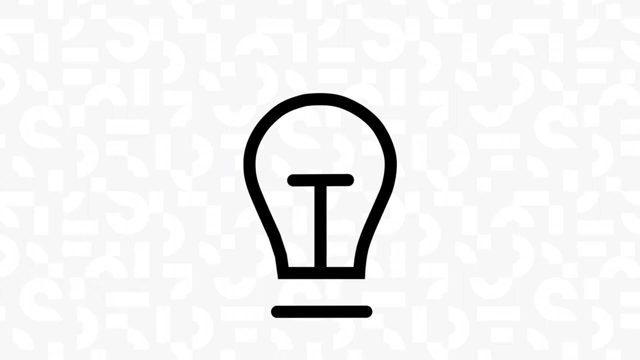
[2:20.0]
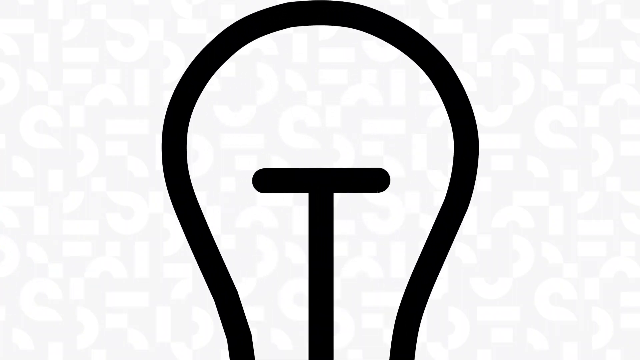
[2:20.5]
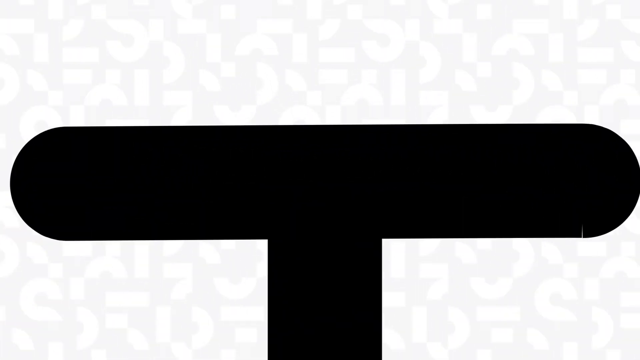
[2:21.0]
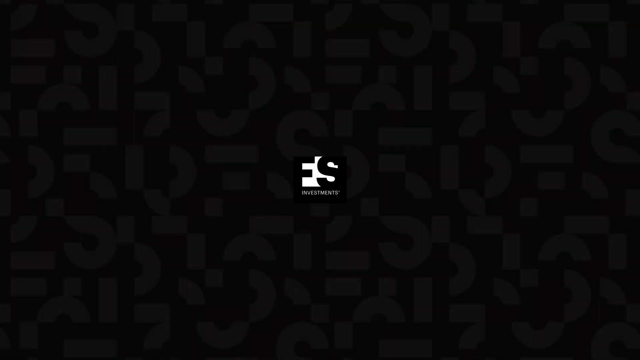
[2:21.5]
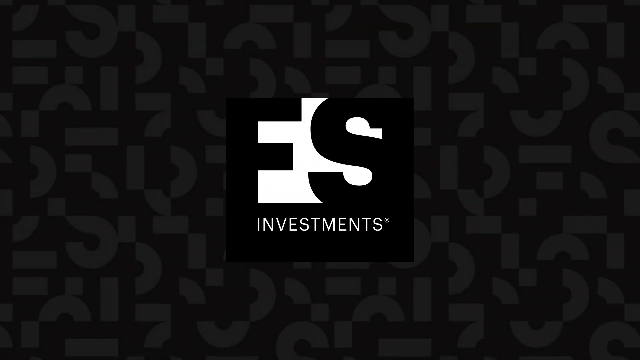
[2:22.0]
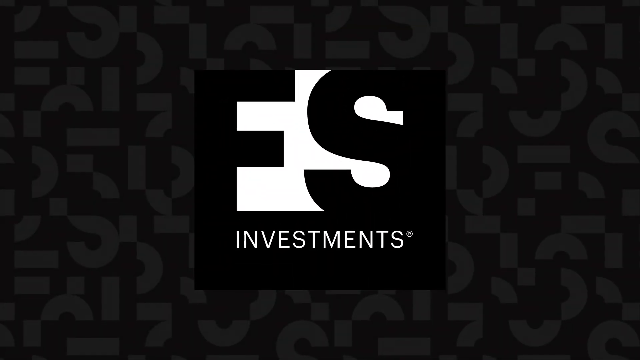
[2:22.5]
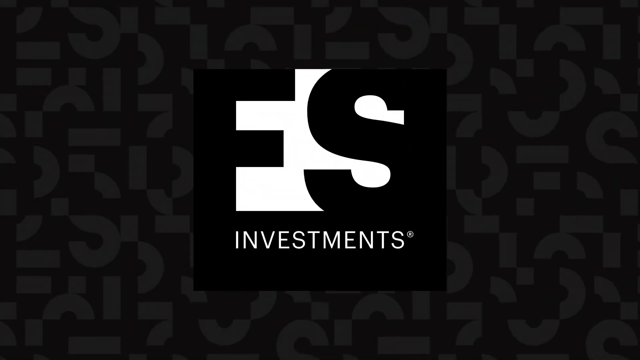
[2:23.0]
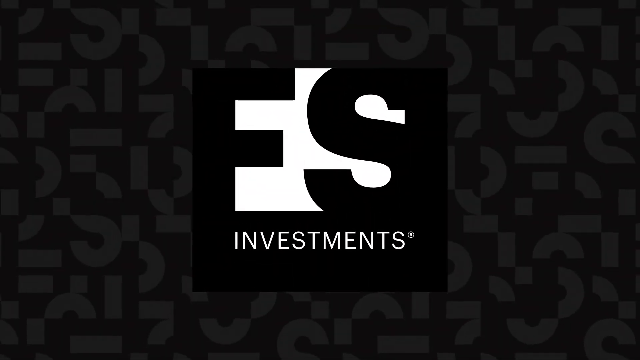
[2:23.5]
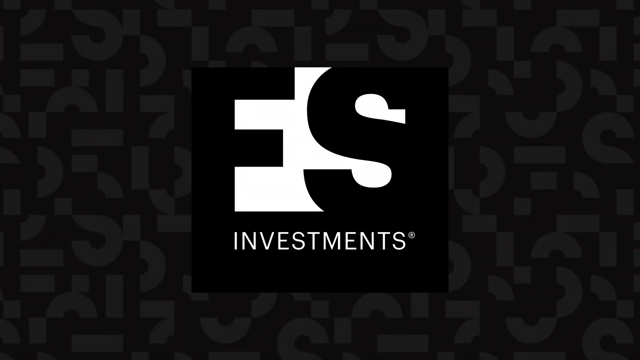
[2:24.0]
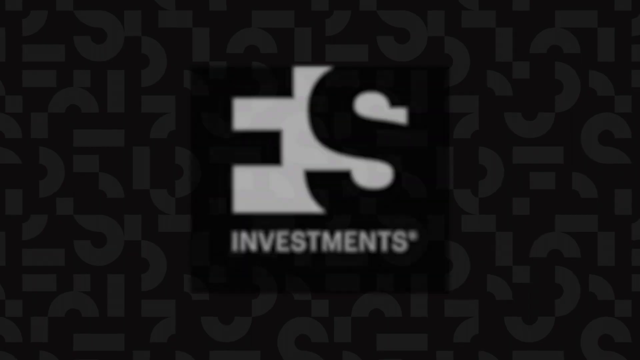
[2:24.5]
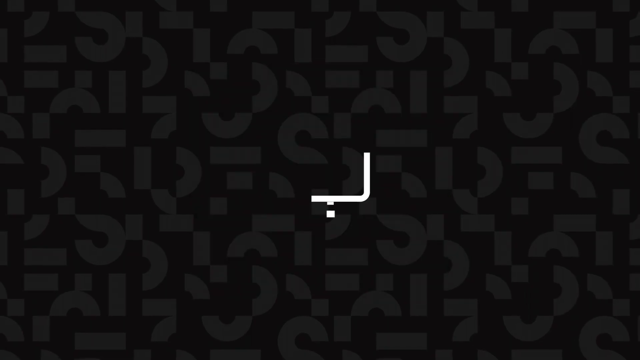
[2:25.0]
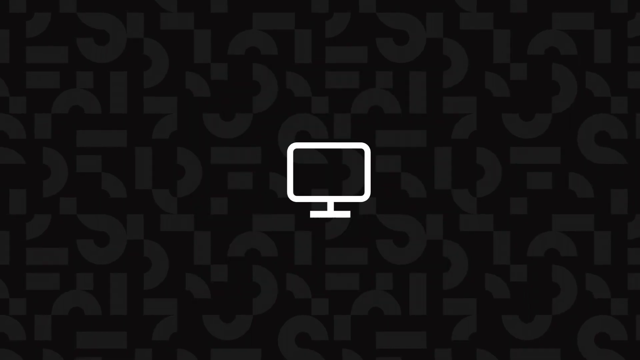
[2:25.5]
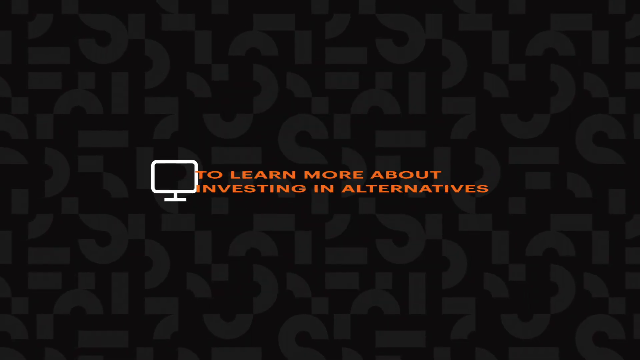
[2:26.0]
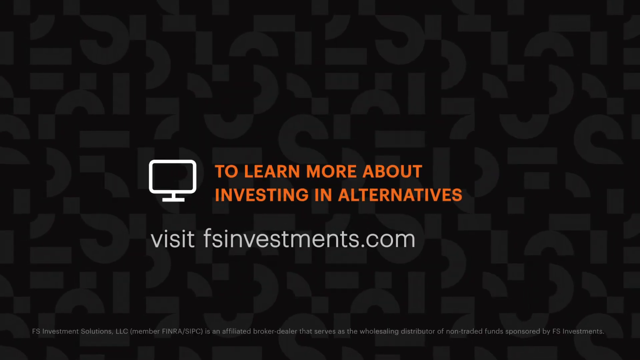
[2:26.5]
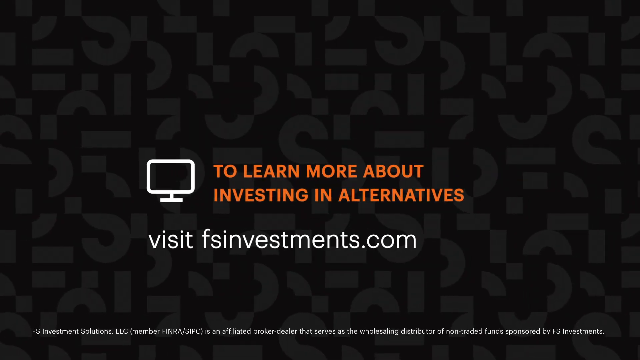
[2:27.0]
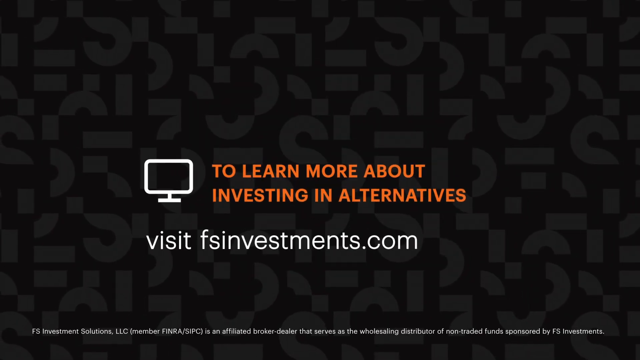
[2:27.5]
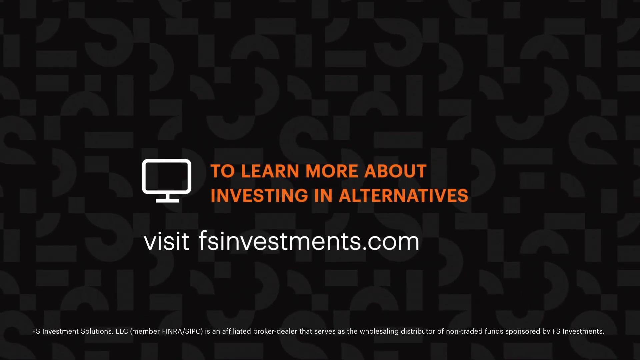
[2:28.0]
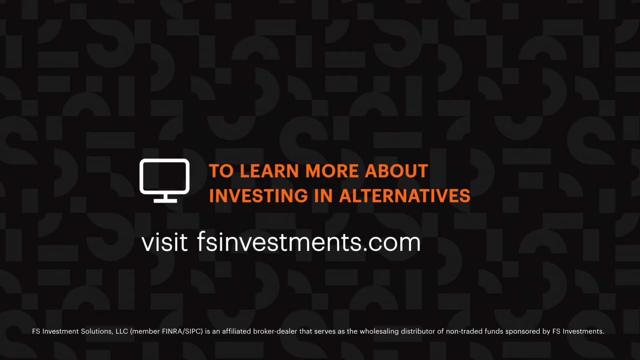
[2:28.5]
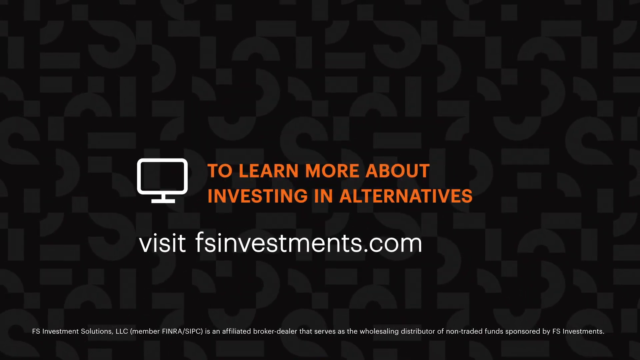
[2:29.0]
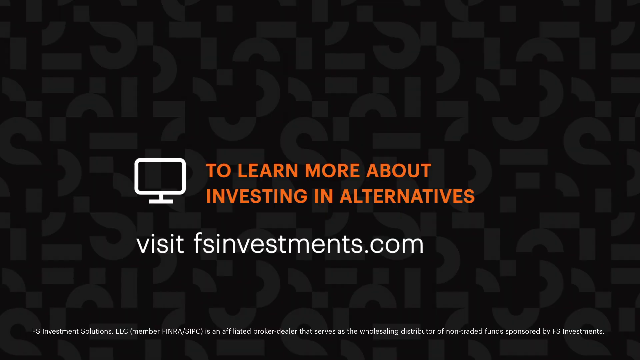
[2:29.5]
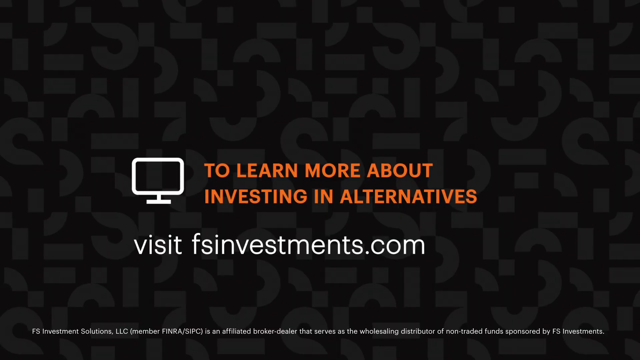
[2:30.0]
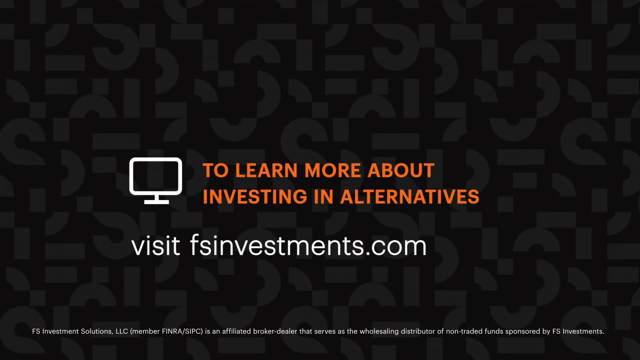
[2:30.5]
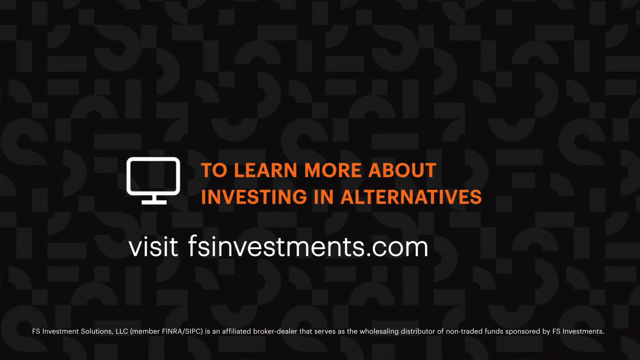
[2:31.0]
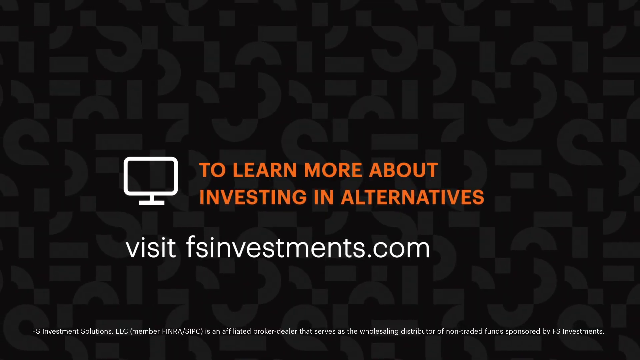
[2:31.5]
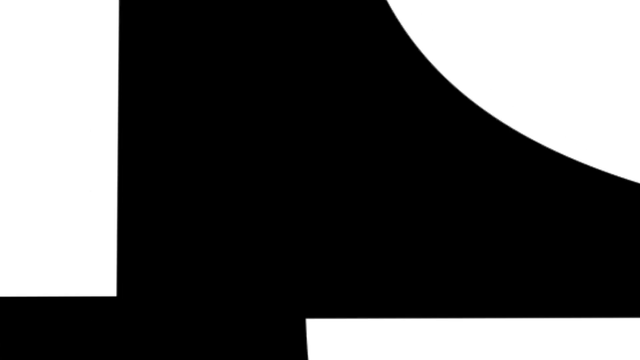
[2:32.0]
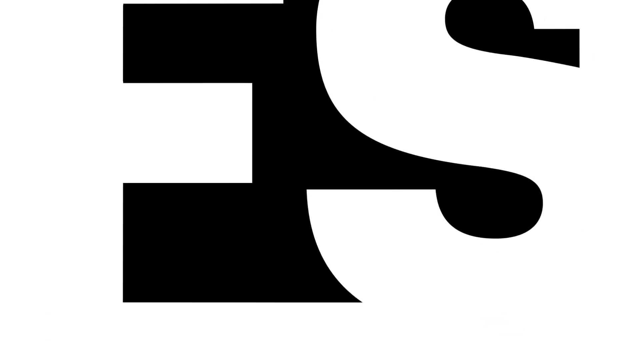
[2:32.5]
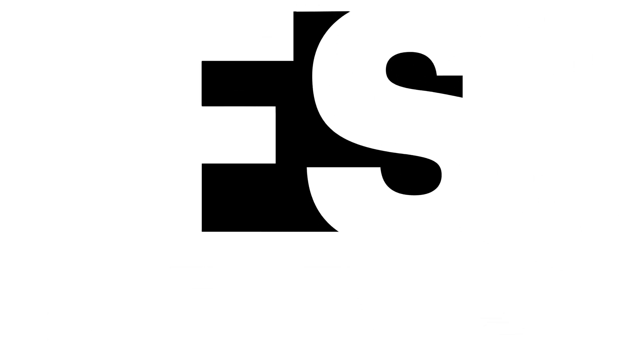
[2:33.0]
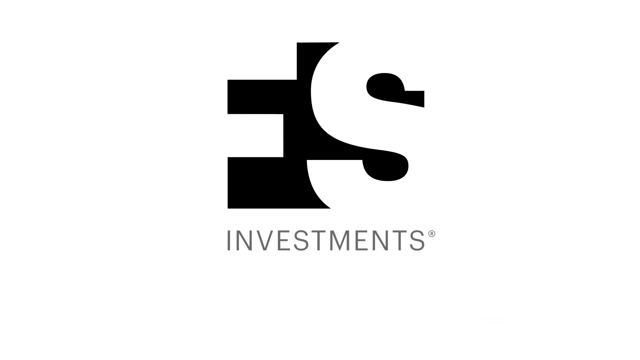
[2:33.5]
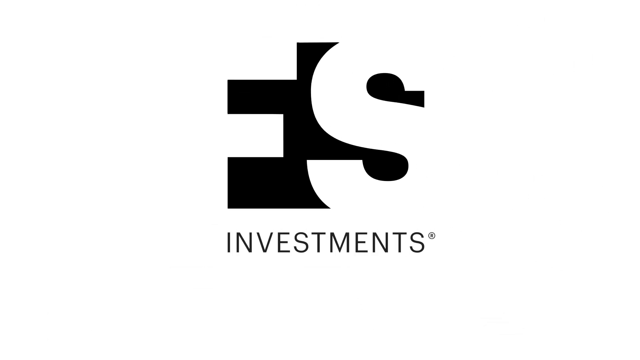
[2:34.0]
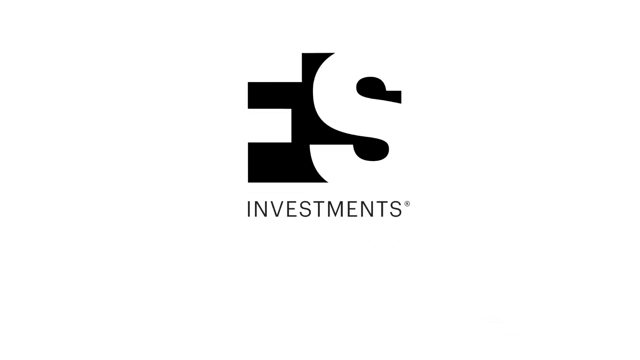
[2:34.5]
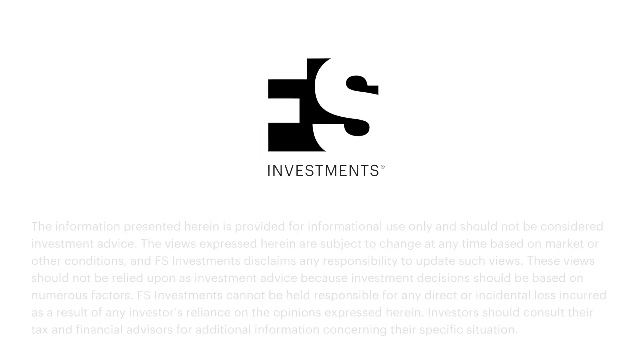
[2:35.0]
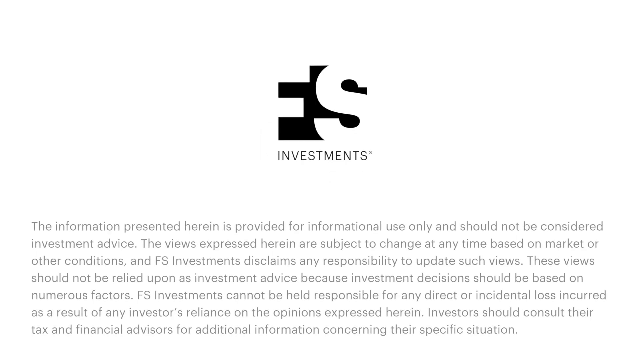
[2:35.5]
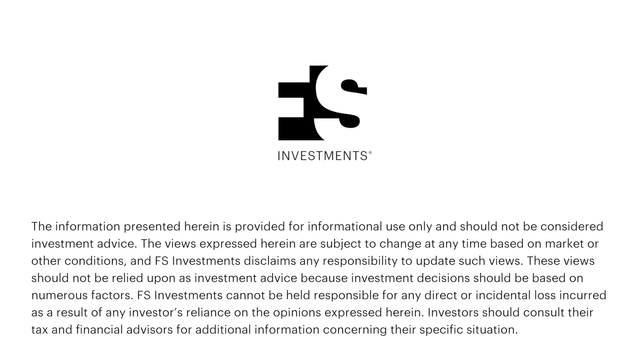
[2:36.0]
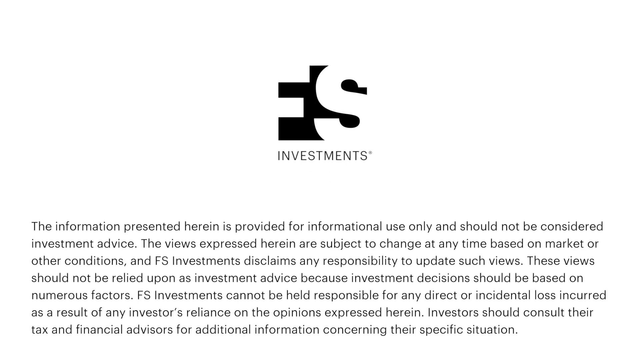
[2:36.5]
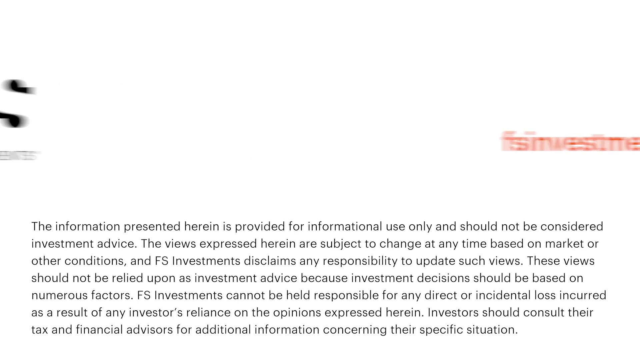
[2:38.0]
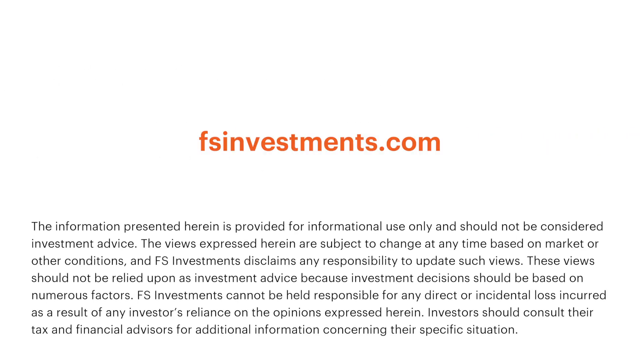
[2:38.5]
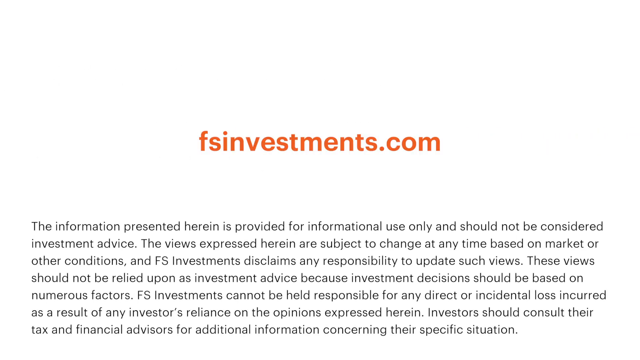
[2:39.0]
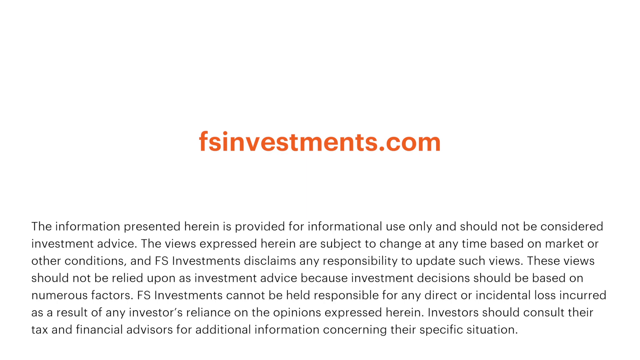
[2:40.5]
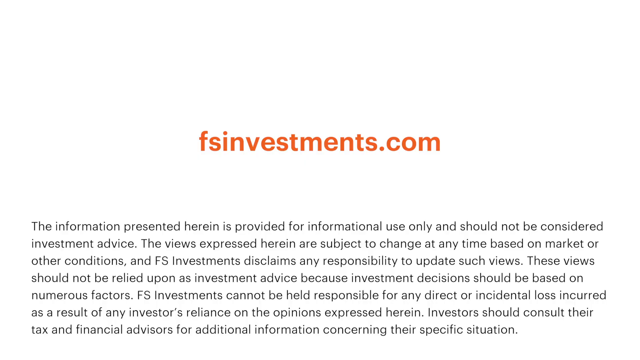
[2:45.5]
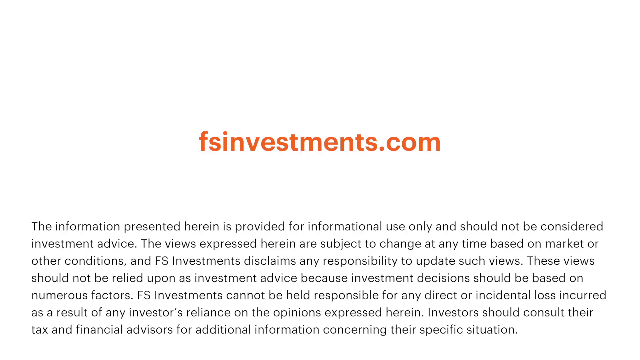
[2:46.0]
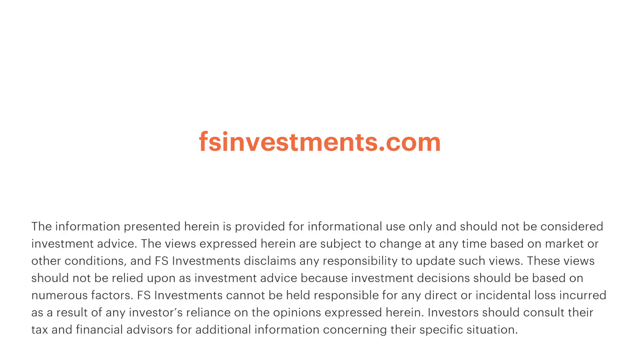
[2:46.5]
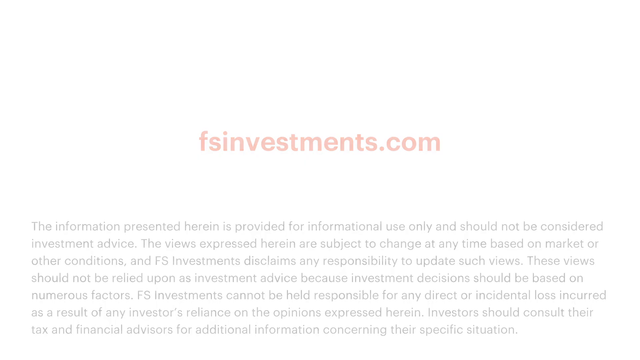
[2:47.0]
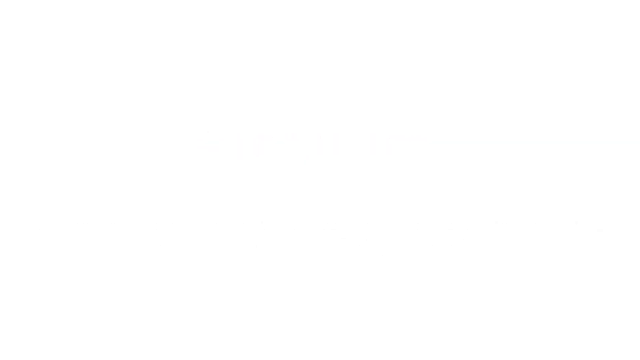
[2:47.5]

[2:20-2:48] A simple drawing of a light bulb in black outlines is on a white background. The view zooms in and the whole screen becomes black. A square-shaped logo for FS investments appears, with the word "investments" in white and large black initials F and S on a white background; it slowly zooms in and disappears. Next, an icon of a white computer monitor in simple outline appears, with orange text reading "to learn more about investing in alternatives" and, underneath, "visit fsinvestments.com" in white, all lowercase. The background shows the letter S cut up into sections and scattered in a disorganized pattern on dark gray. The text kind of starts to zoom in, and some fine print appears at the bottom of the screen in white for only a fraction of a second, making it hard to read. The FS investments logo appears again, this time with the letters F and S in white on a black background and "investments" in black, and it slowly zooms out. A paragraph of information underneath is a disclaimer, printed in small black text with regular capitalization on a white background. The logo disappears and the website URL appears again, this time in orange.